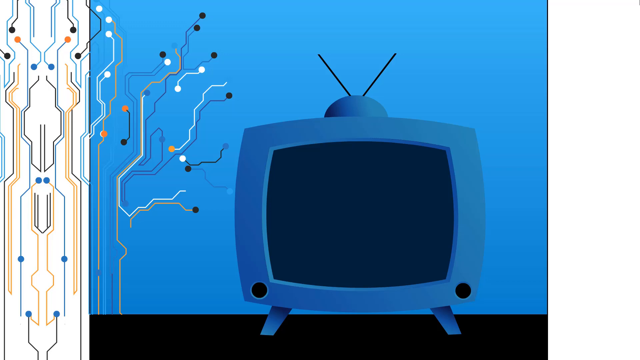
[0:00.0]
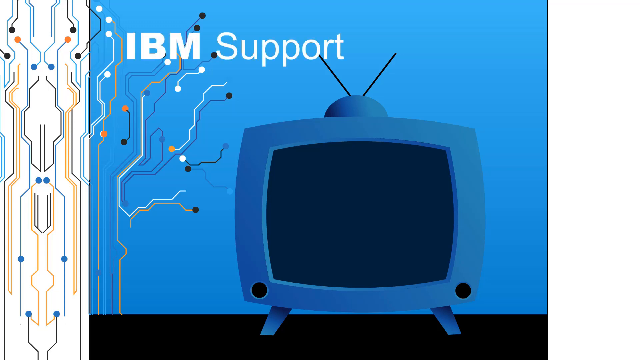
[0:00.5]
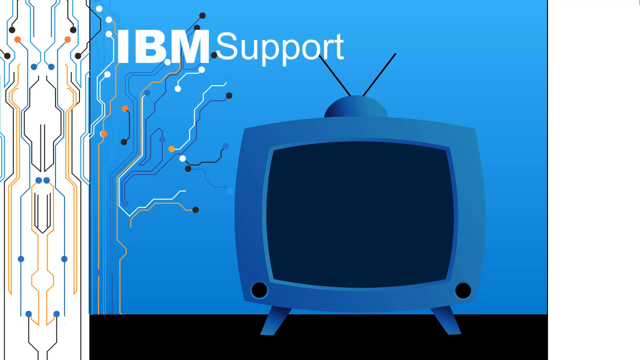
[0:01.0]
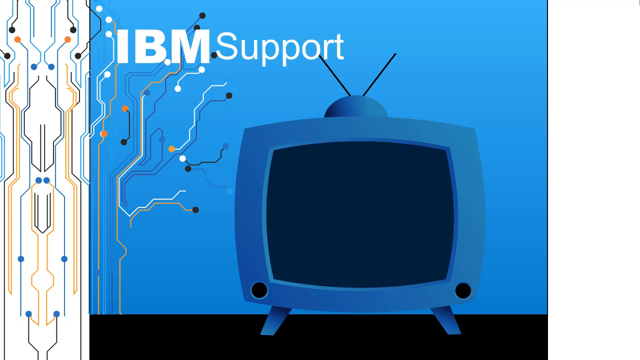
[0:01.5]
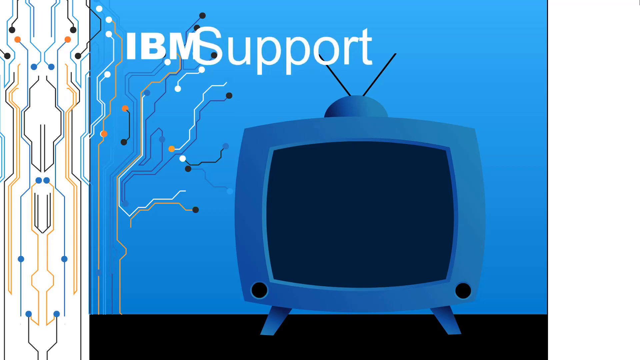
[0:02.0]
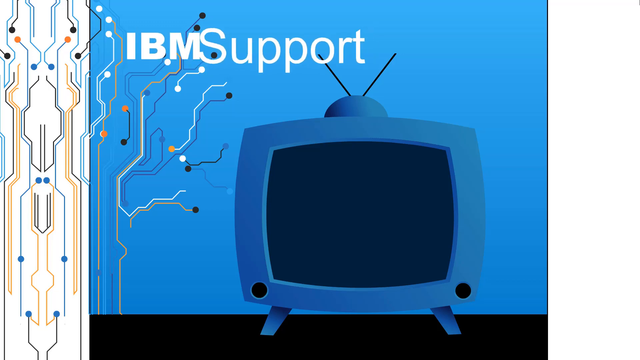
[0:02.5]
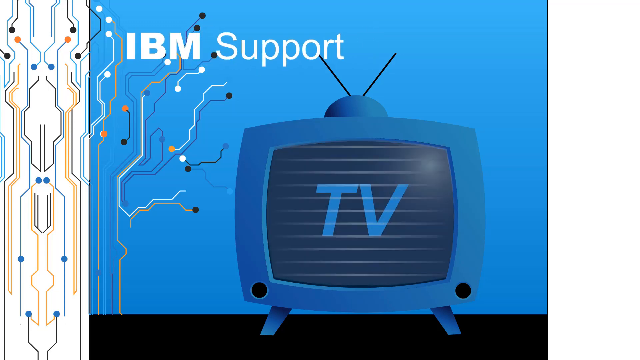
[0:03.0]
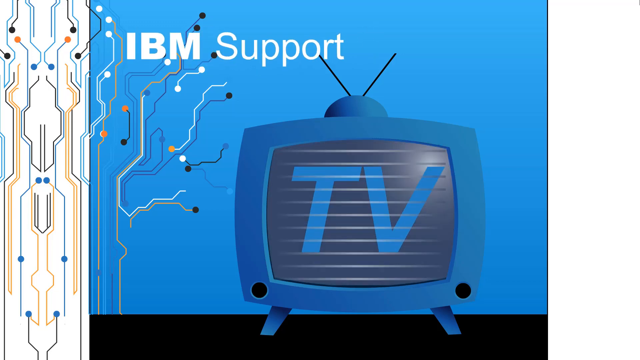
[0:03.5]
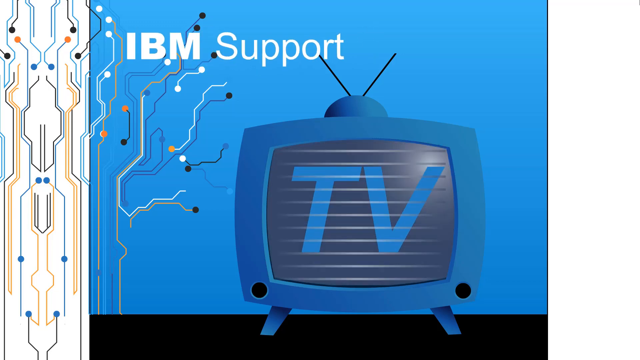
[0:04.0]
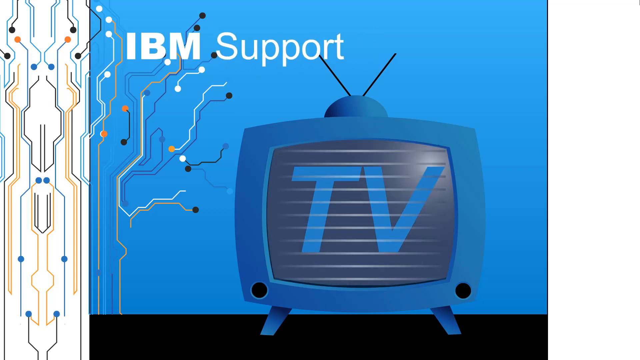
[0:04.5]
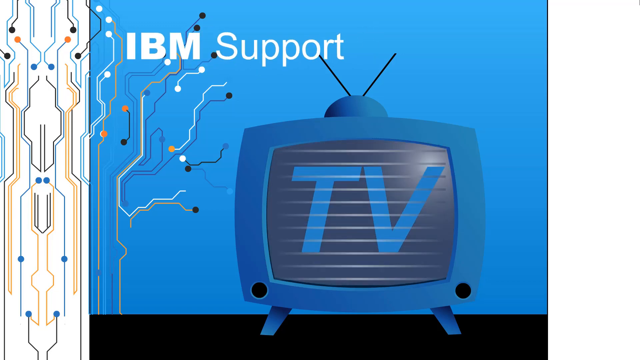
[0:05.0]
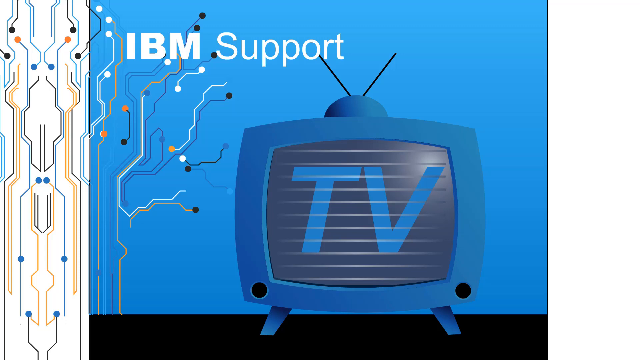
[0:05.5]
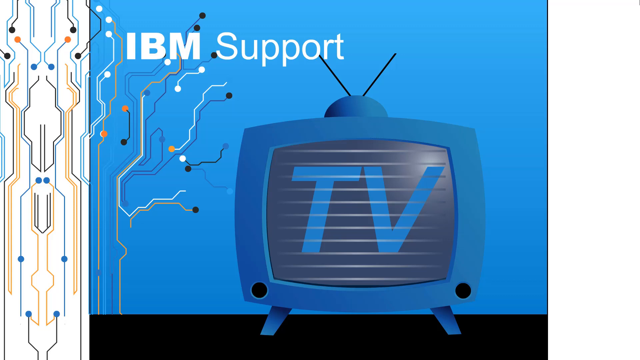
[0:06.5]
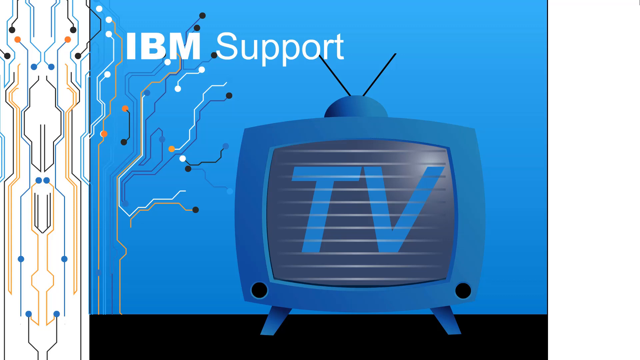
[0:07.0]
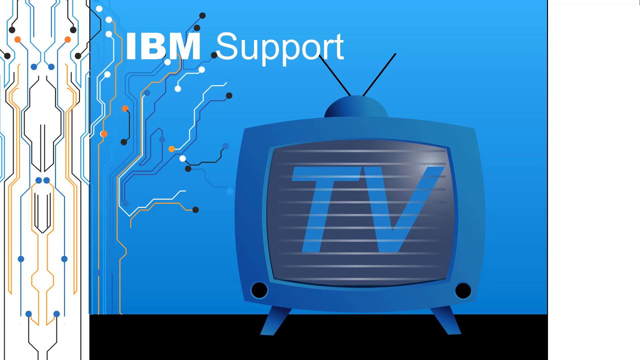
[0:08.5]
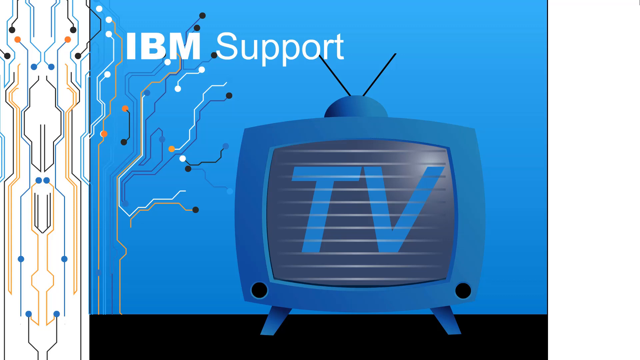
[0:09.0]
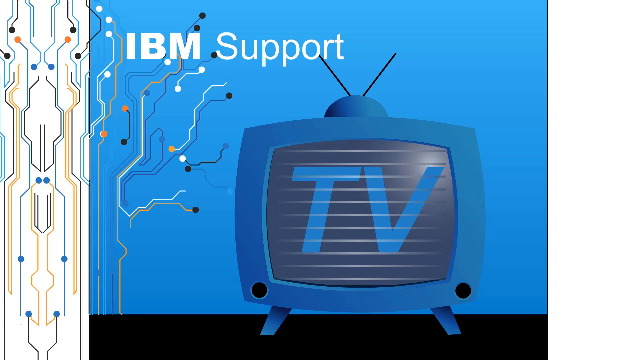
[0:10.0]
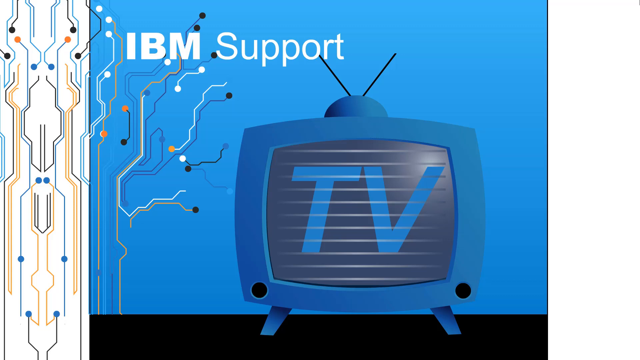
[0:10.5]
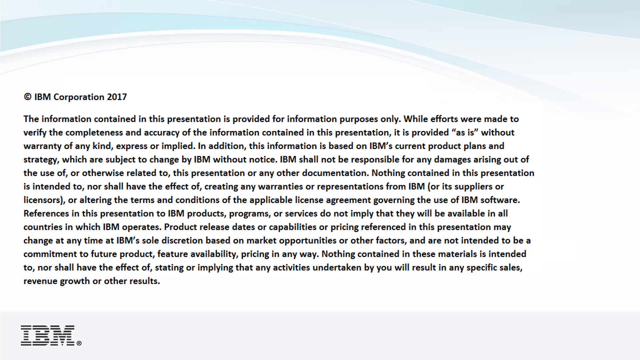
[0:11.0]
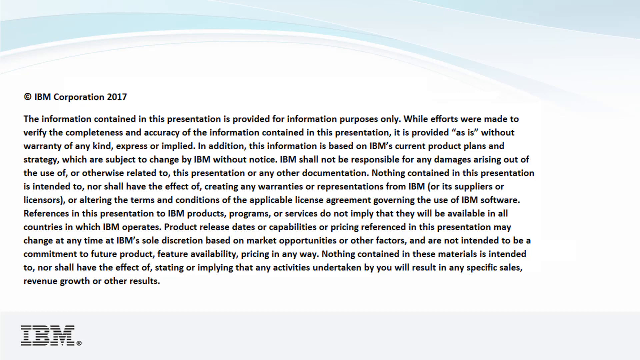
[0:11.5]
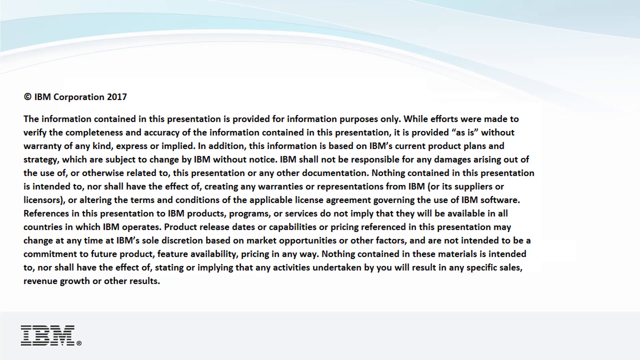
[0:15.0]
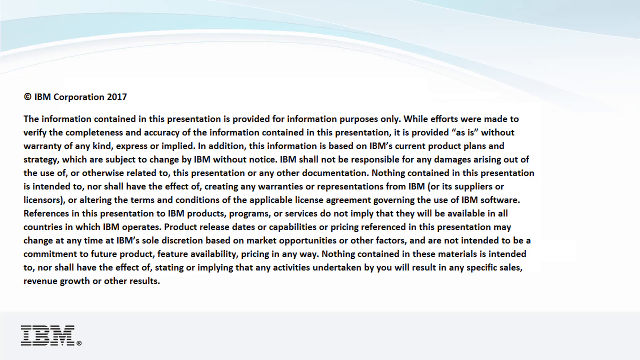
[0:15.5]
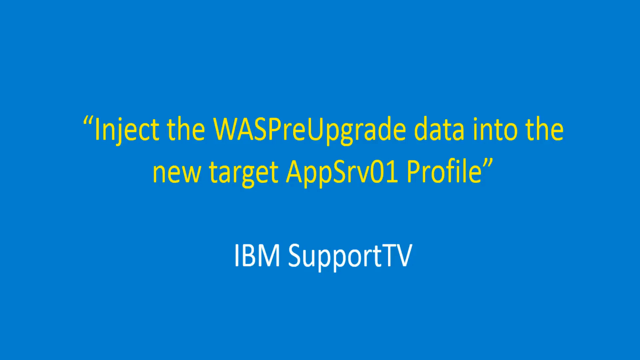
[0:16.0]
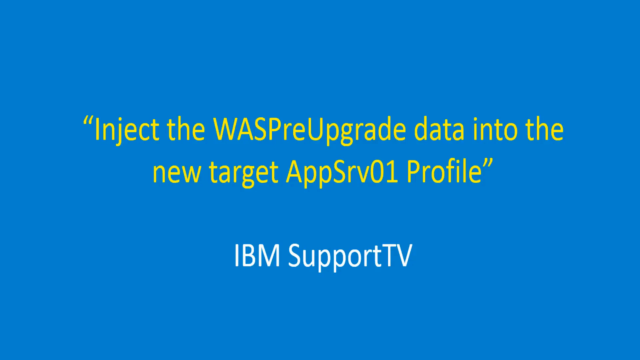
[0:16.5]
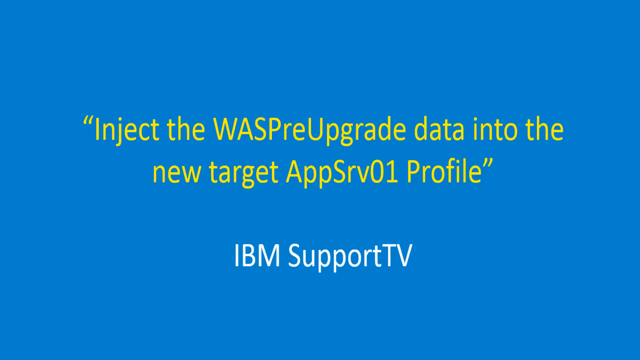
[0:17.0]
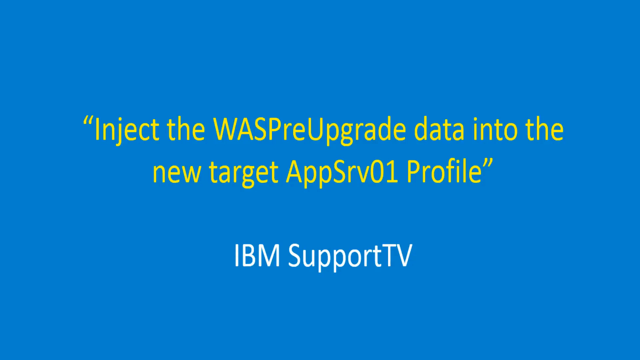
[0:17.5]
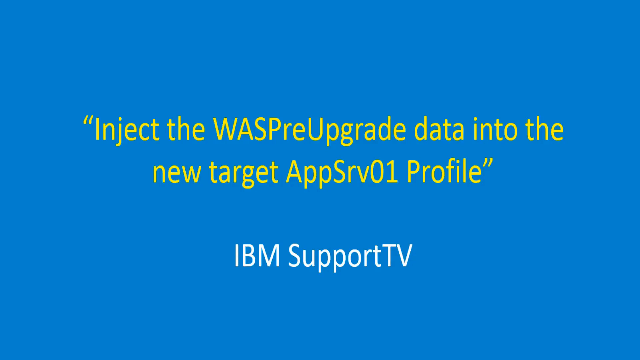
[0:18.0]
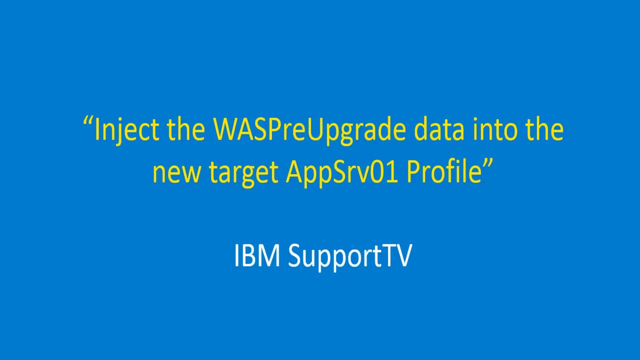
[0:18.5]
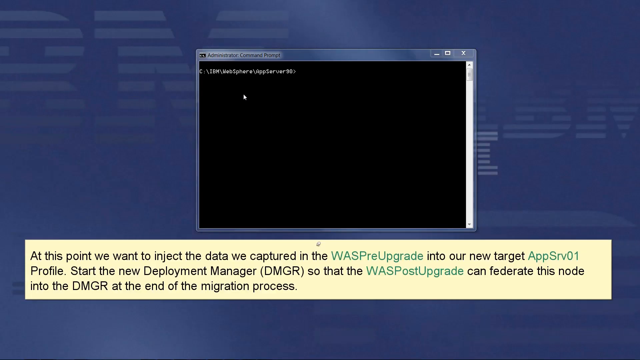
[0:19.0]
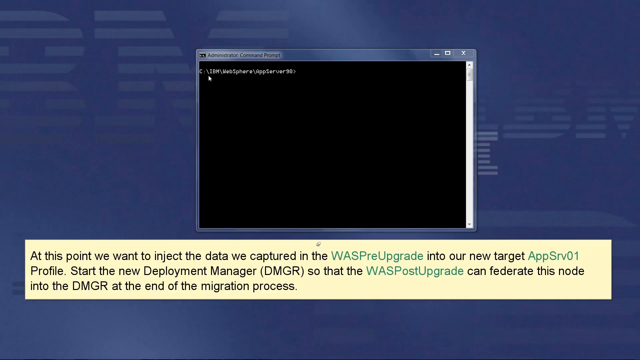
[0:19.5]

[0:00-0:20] An introductory screen has a blue background with white on the right and left sides. On the blue background is a cartoon-looking TV, and above it, on the top left, the text reads "IBM Support." On the left side is a design that looks like electric wiry lines and nodes. The word "IBM" gets big and then little, and then the word "Support" gets big and little, as if it breathes a little. The TV turns on, and in blue letters it says "TV." Next comes a page with a white background and light blue waves on top, showing a long disclaimer message about IBM, with the IBM logo in the bottom left-hand corner; the message gives information pertaining to the presentation and its intended purposes. Then, on a blue background, yellow text in quotes in the middle reads "Inject the WASPreUpgrade data into the new target AppSrv01 profile." with "IBM Support TV" in white font underneath. What looks like a computer desktop screen then appears with an administrator command prompt open, and a yellow box at the bottom reads: "At this point, we want to inject the data we captured in the WASPreUpgrade into our new target AppSrv01 profile. Start the new deployment manager (dmgr) so that the WASPostUpgrade can federate this node into the dmgr at the end of the migration process."